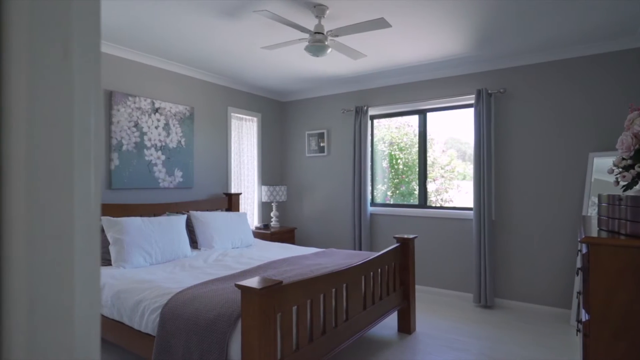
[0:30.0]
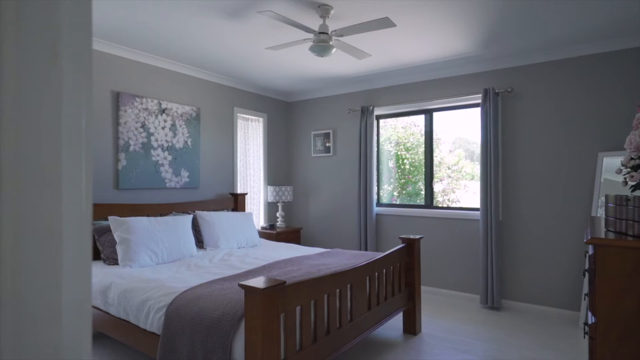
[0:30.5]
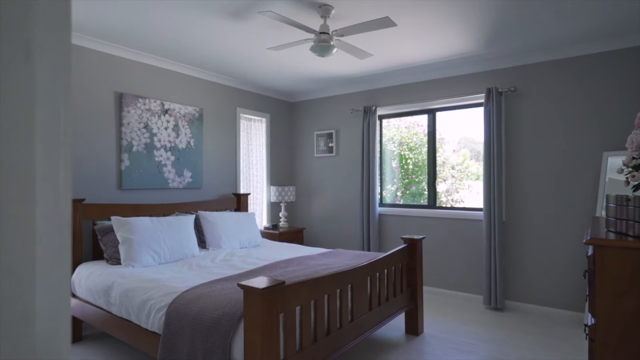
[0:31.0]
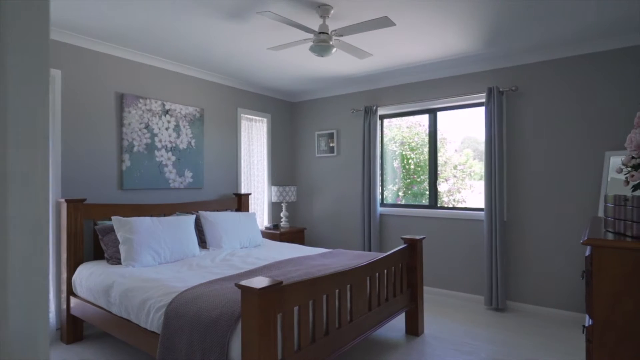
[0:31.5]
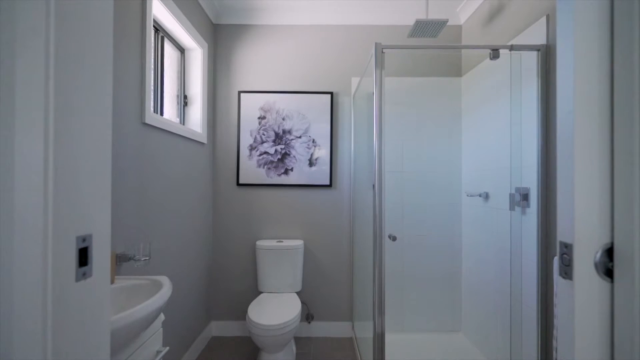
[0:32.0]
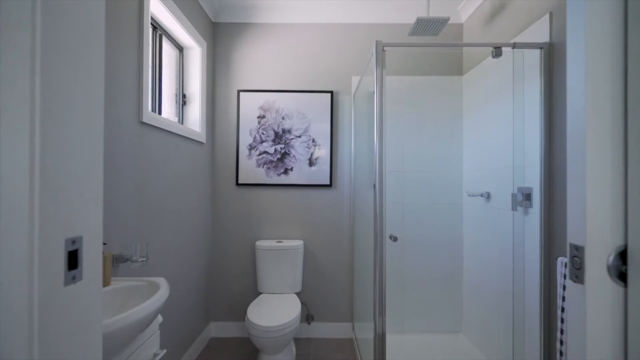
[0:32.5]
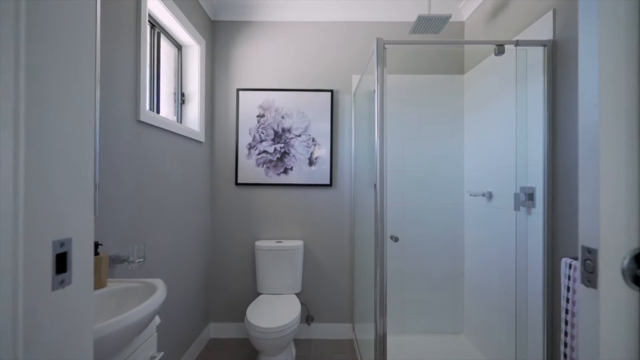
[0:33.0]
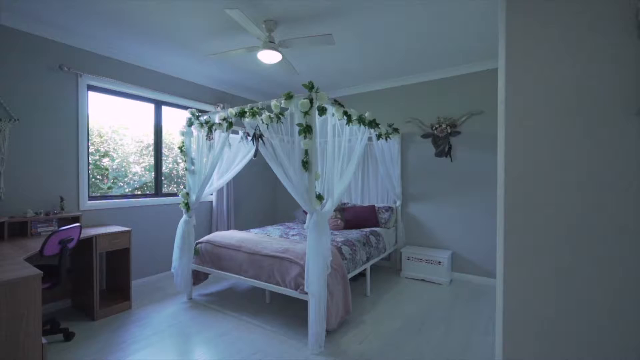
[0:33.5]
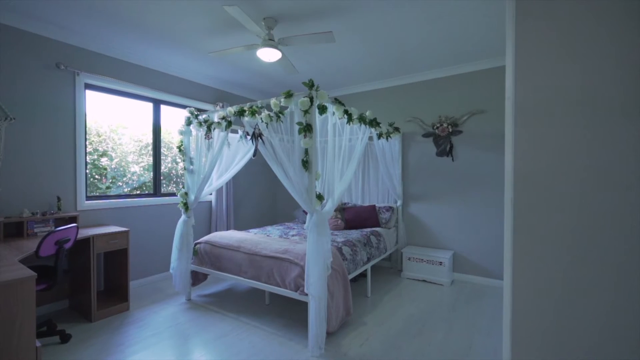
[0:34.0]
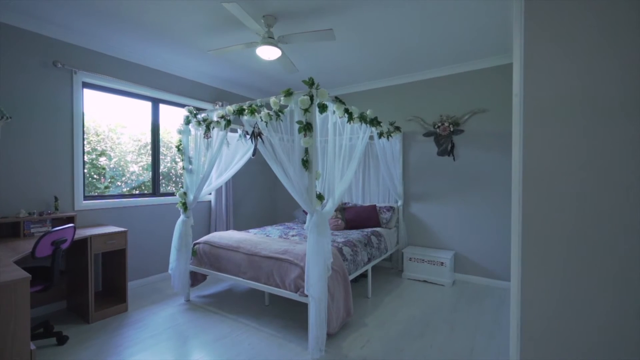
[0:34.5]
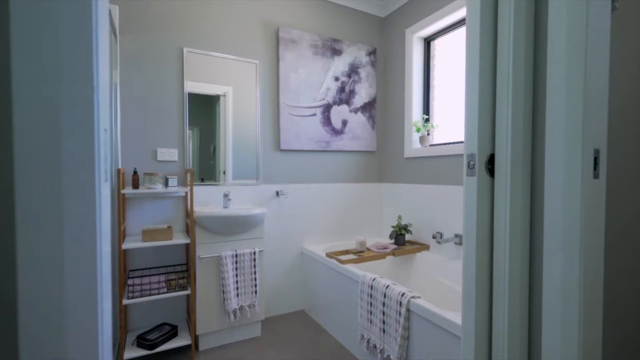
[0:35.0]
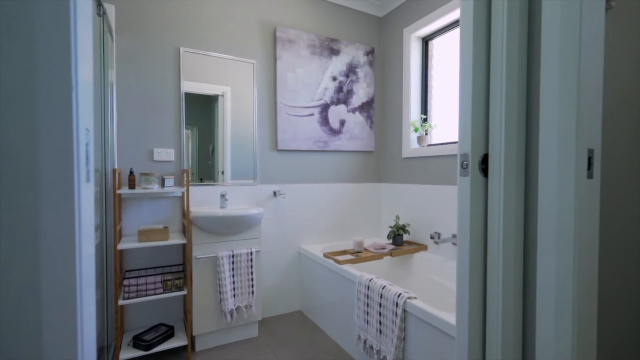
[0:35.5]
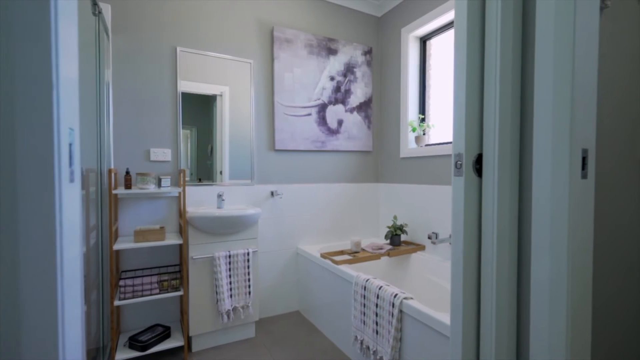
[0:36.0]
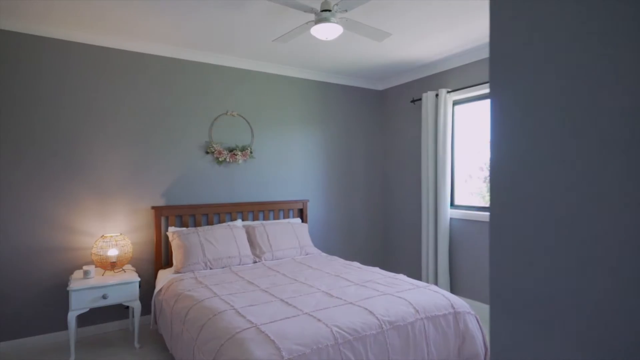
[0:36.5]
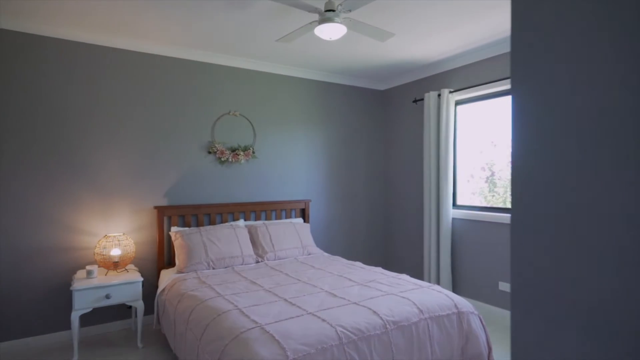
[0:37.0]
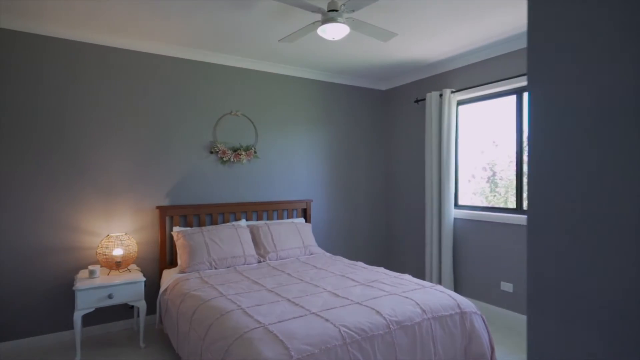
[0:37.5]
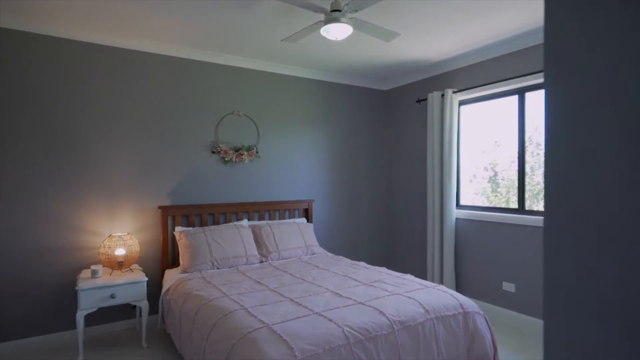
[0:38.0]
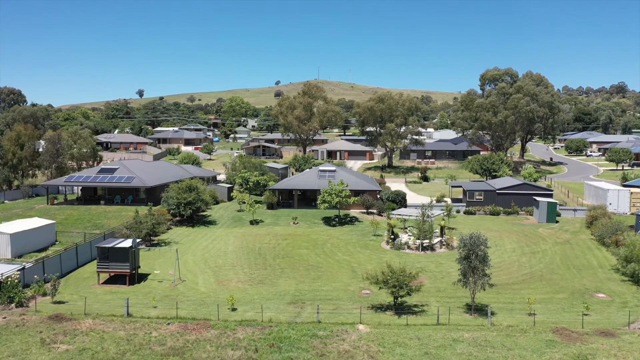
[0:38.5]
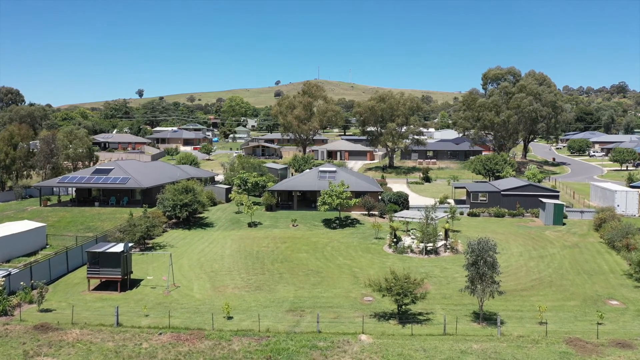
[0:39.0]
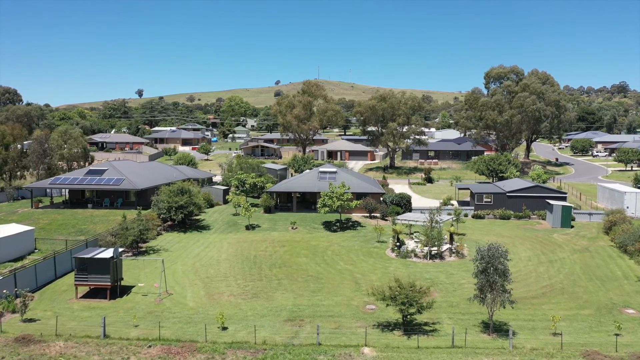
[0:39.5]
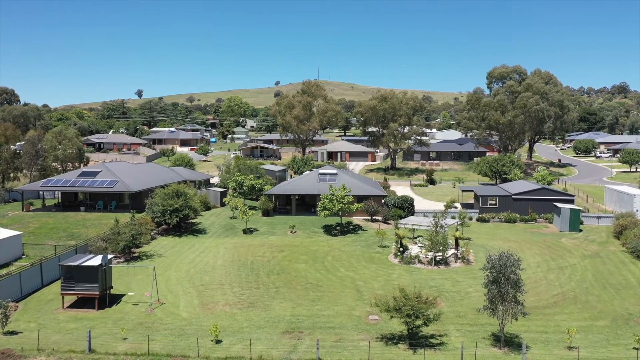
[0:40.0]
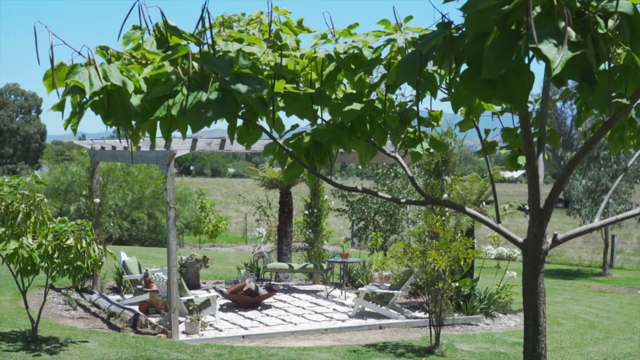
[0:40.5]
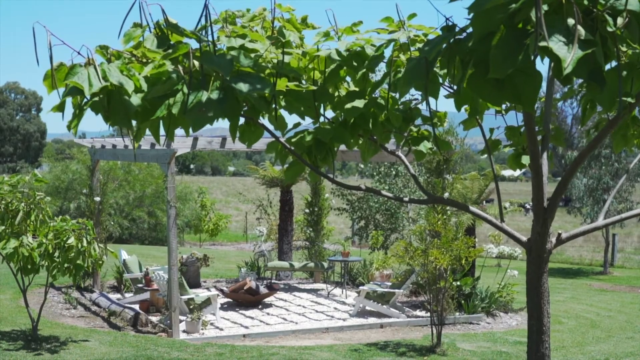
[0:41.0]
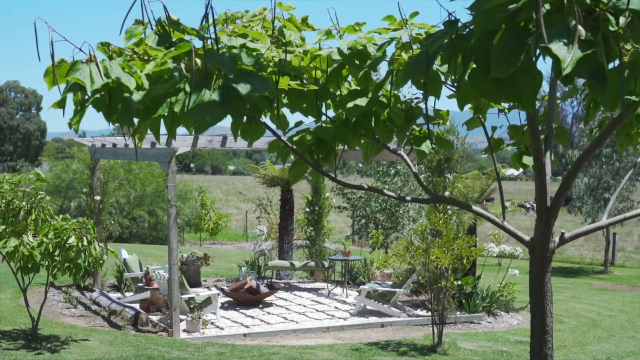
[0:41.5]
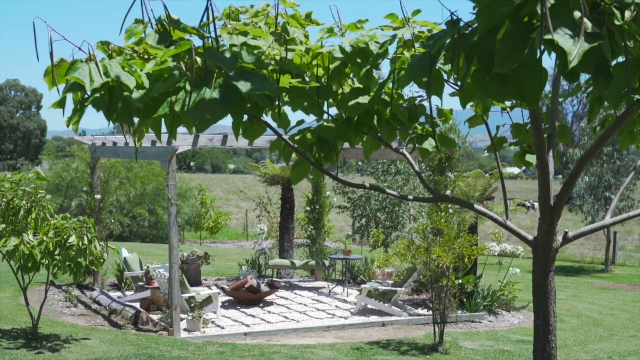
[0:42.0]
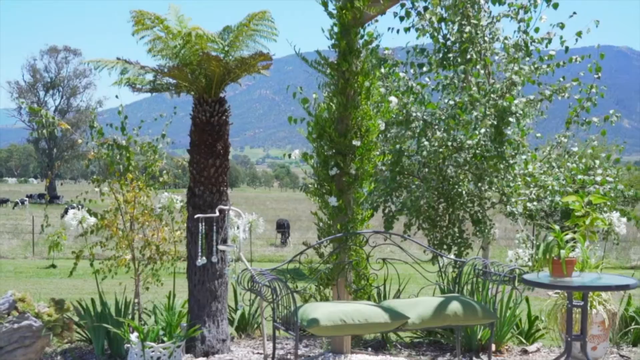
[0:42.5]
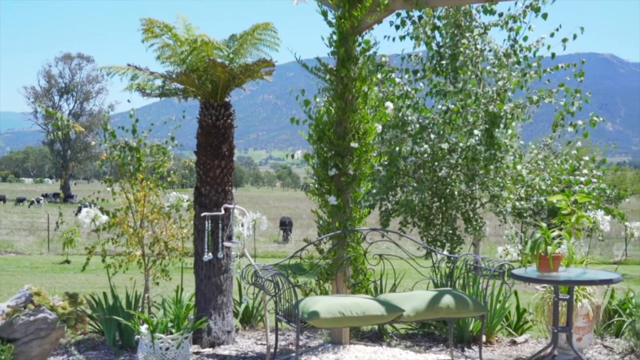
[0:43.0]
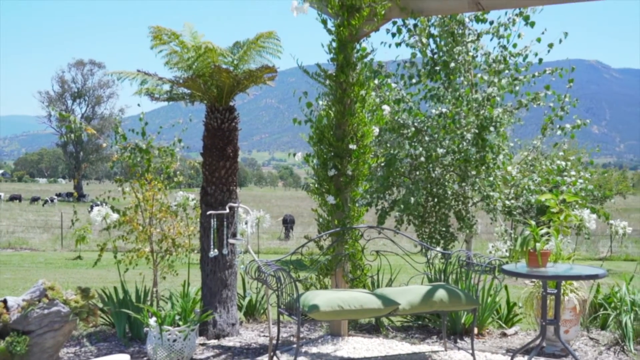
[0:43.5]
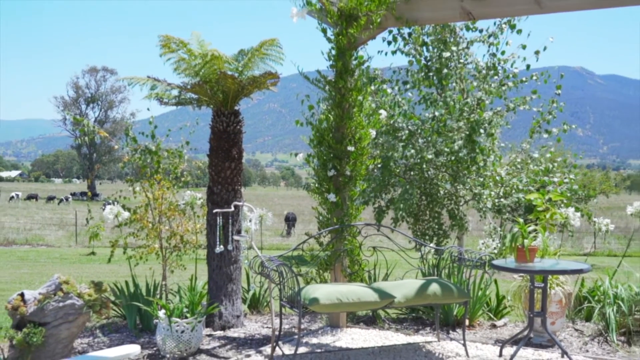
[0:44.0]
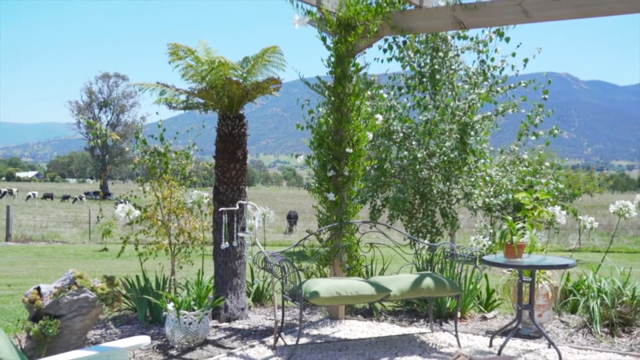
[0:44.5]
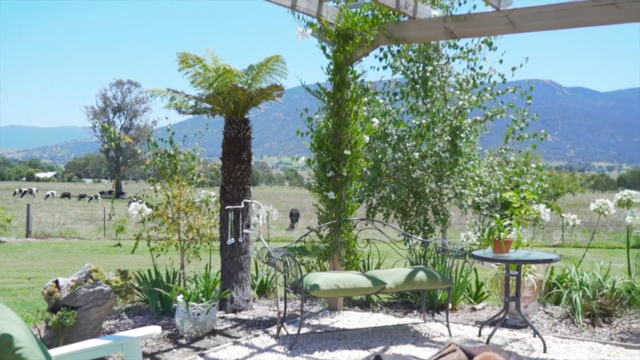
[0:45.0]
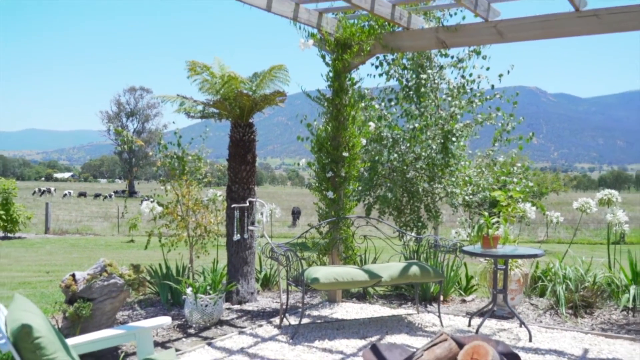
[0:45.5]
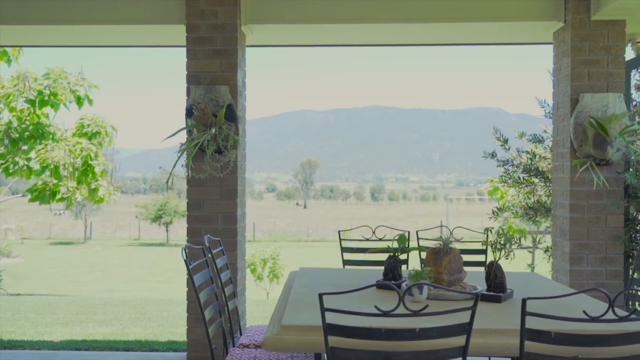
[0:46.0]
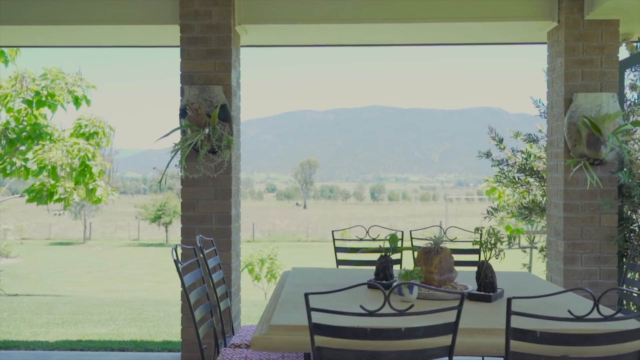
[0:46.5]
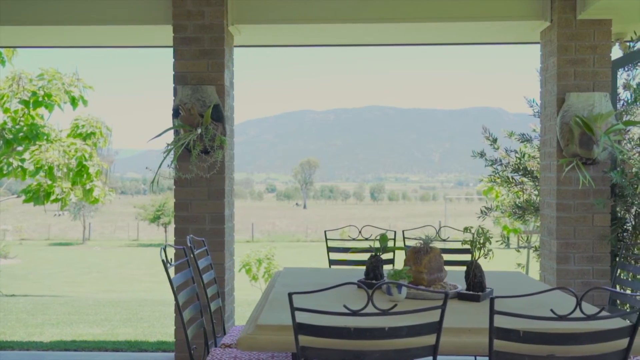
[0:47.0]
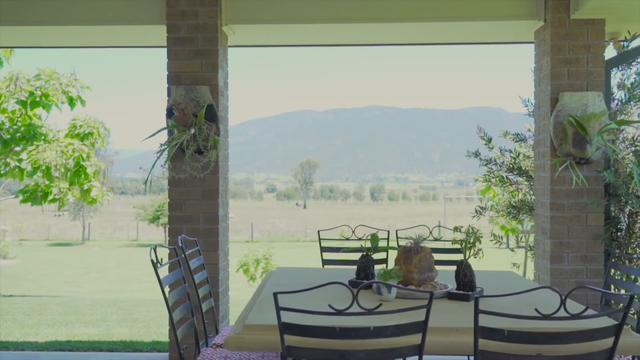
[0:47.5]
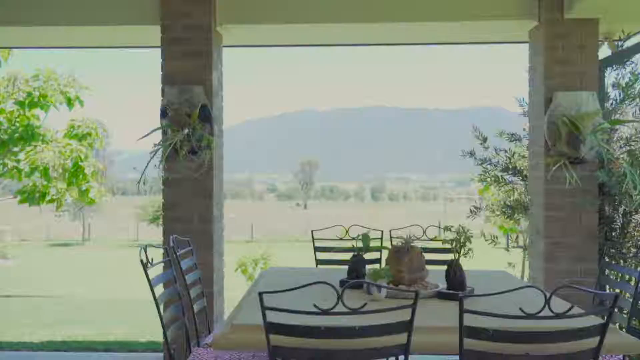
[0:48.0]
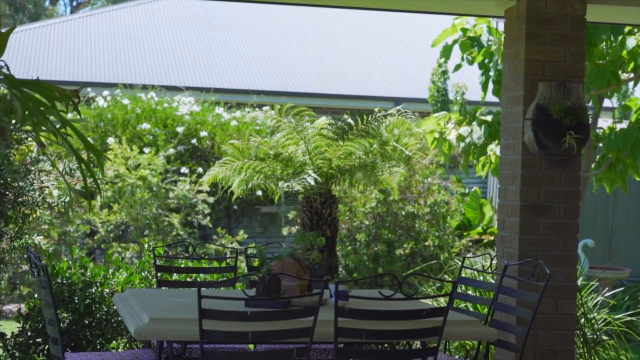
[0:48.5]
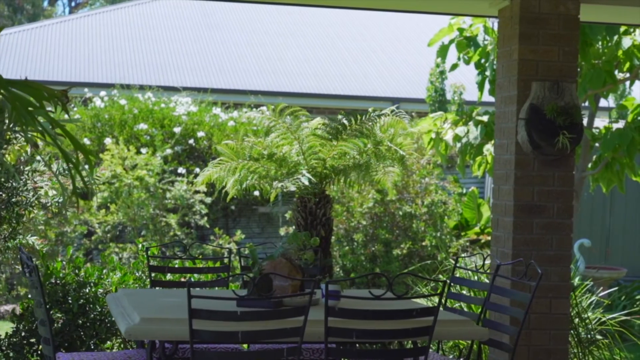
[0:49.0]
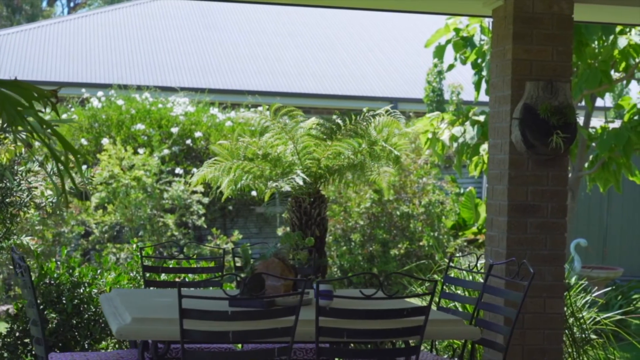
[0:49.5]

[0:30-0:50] A bedroom has a big bed that looks like a couple's bed, with two white pillows and a white duvet cover with a dark red, bordeaux-like colour on the bottom part. Above the bed is a painting of what looks like white flowers on a soft blue background. The walls seem to be grey with a slight hint of green. A window has one curtain on the left and one on the right, and there is a fan in the ceiling. Next comes a shot of the bathroom, which has a painting hung above the toilet, carries on the colour scheme from the bedroom, and has a shower. The video moves on to another bedroom with a pink canopy bed and a bordeaux-coloured pillow; the canopy has princess-like white flowers and vines surrounding the top and white see-through curtains.